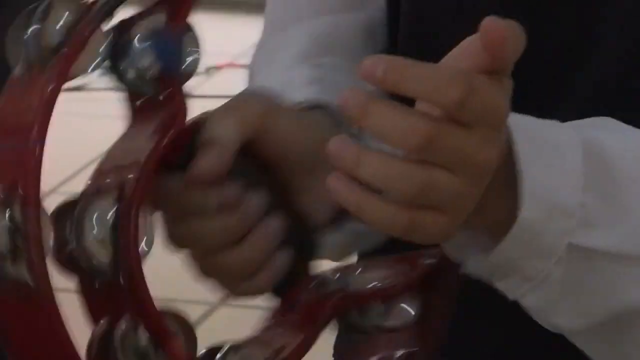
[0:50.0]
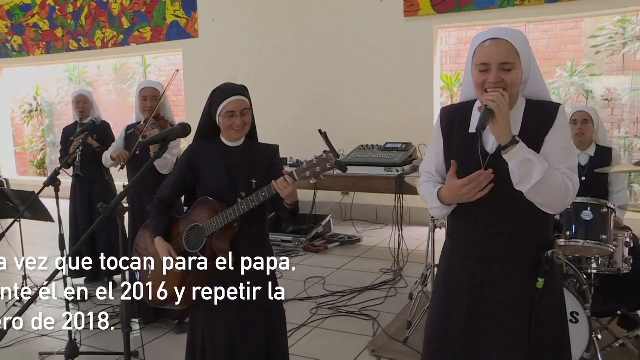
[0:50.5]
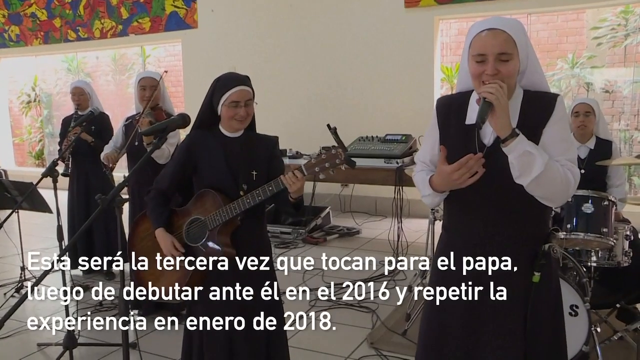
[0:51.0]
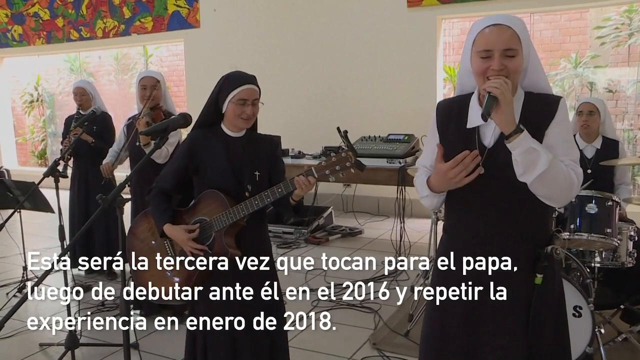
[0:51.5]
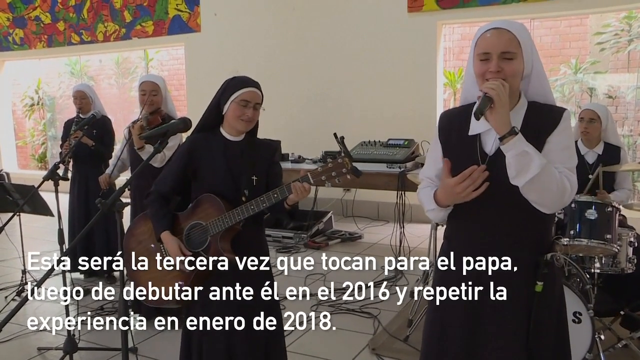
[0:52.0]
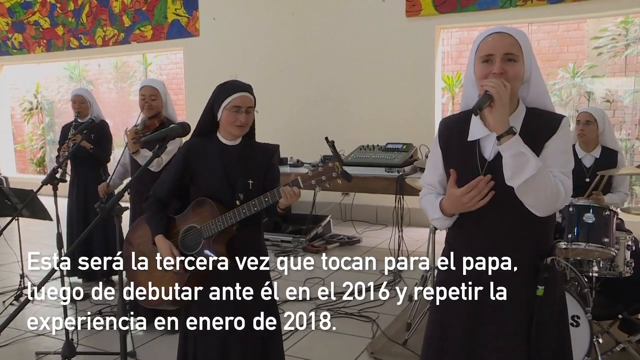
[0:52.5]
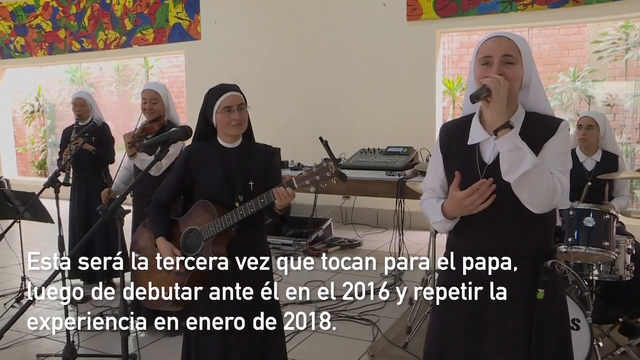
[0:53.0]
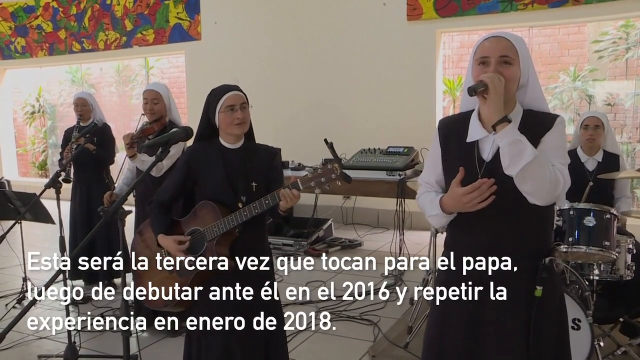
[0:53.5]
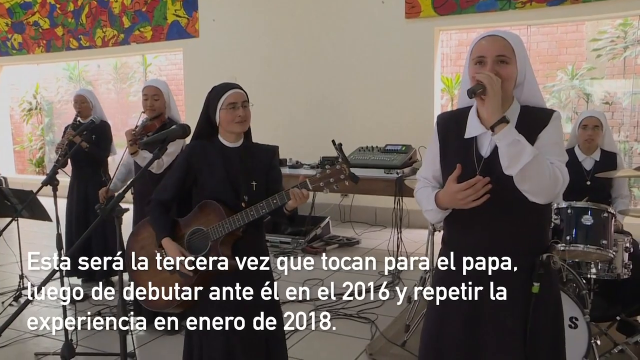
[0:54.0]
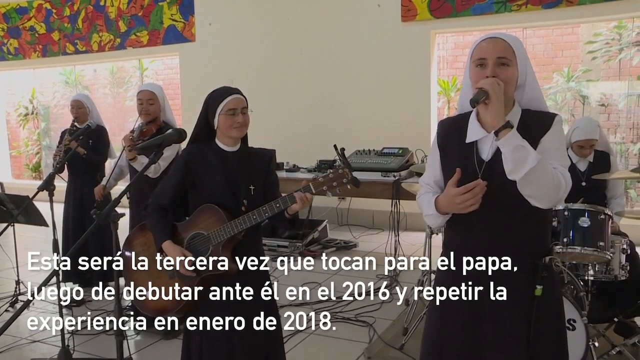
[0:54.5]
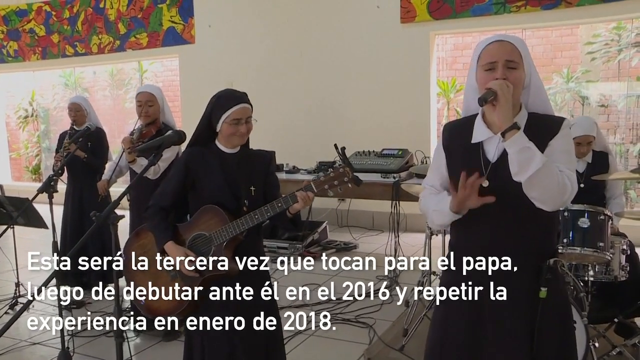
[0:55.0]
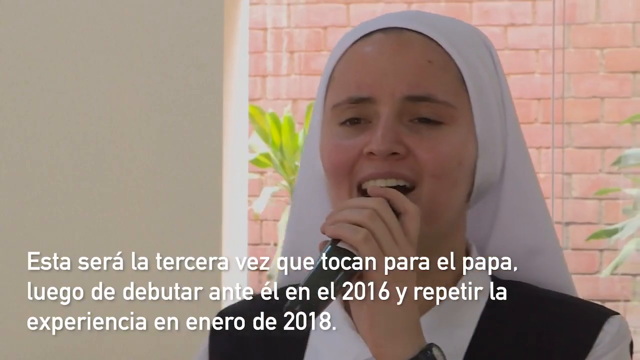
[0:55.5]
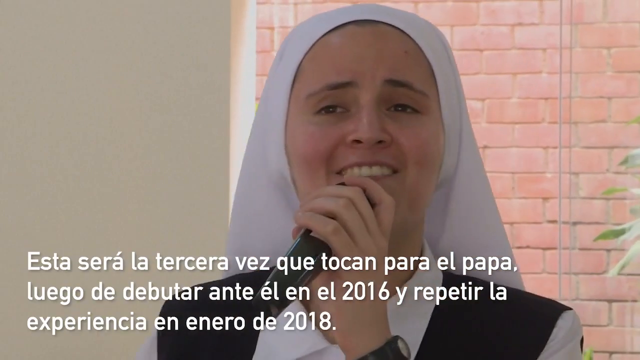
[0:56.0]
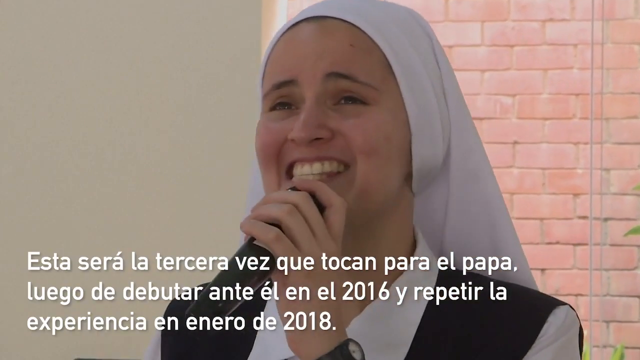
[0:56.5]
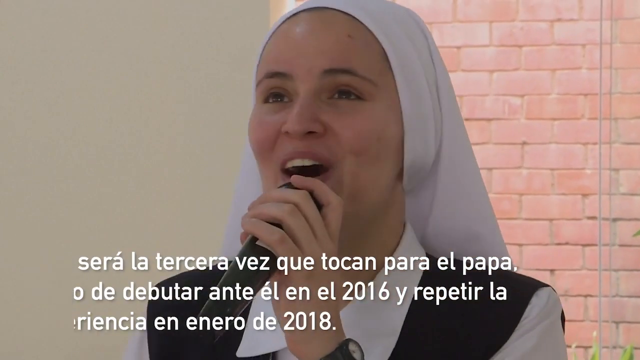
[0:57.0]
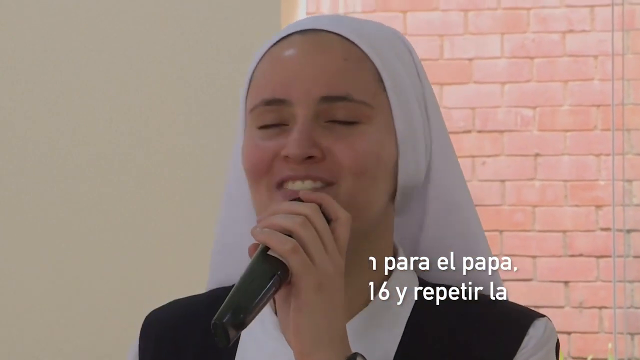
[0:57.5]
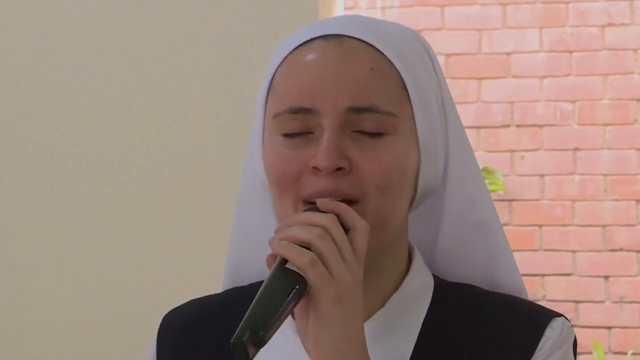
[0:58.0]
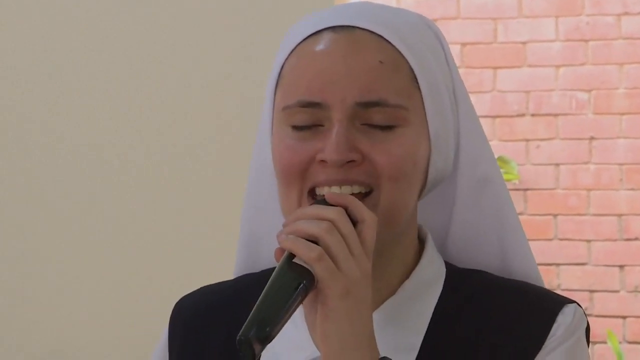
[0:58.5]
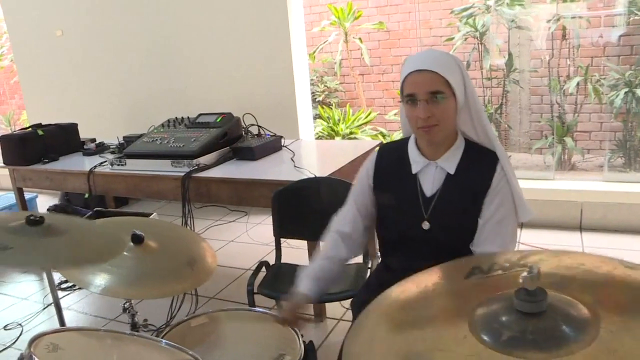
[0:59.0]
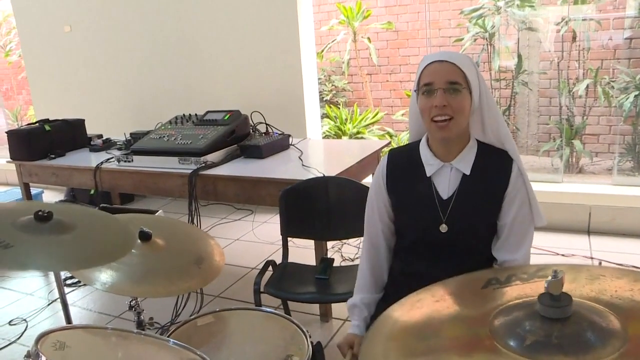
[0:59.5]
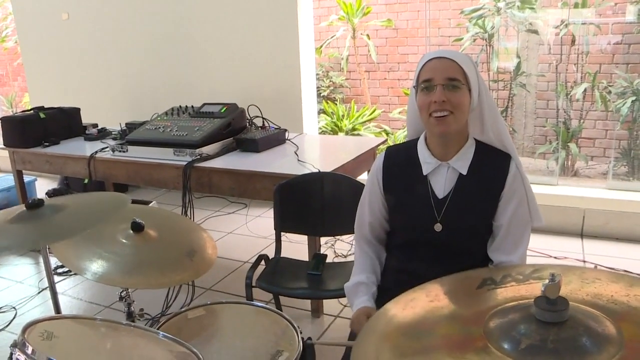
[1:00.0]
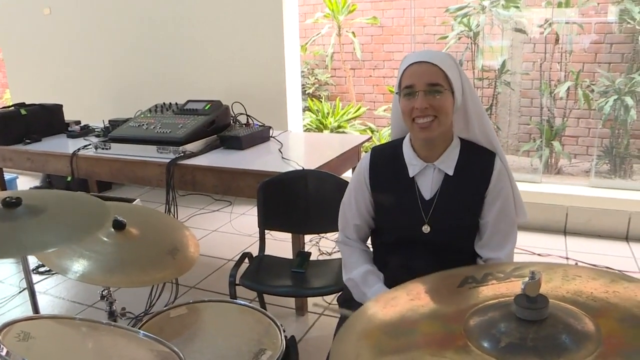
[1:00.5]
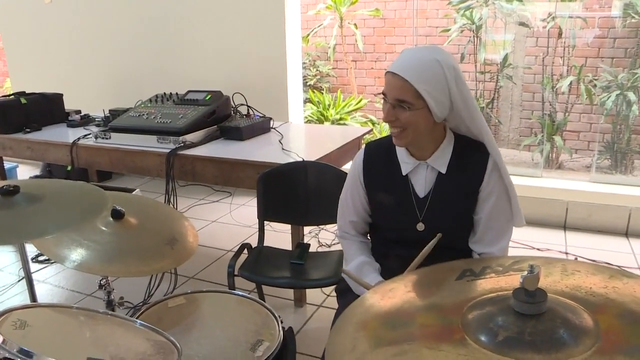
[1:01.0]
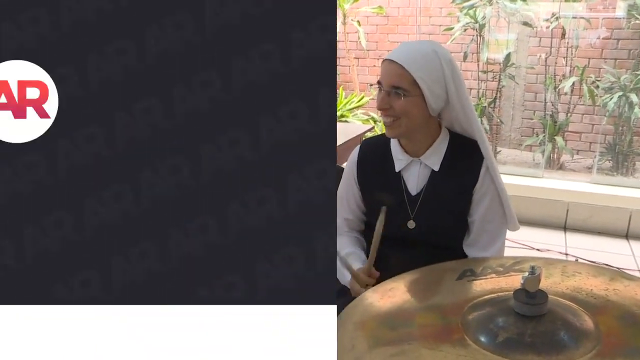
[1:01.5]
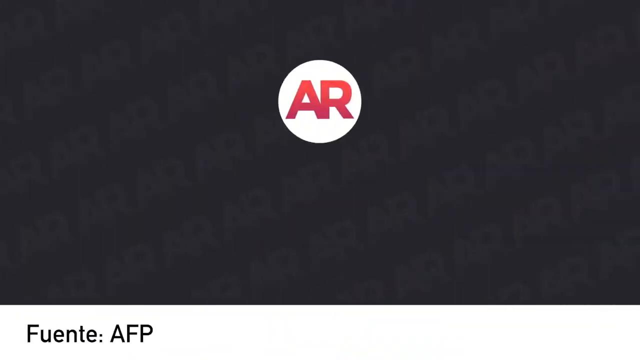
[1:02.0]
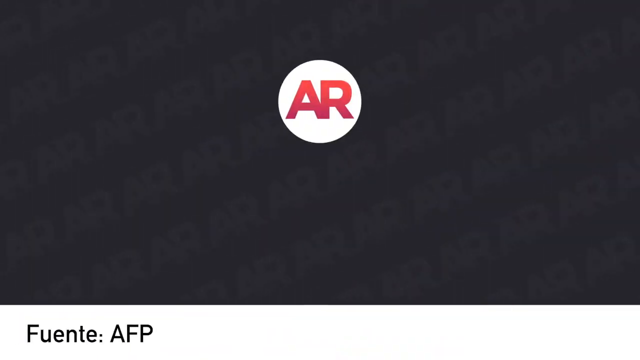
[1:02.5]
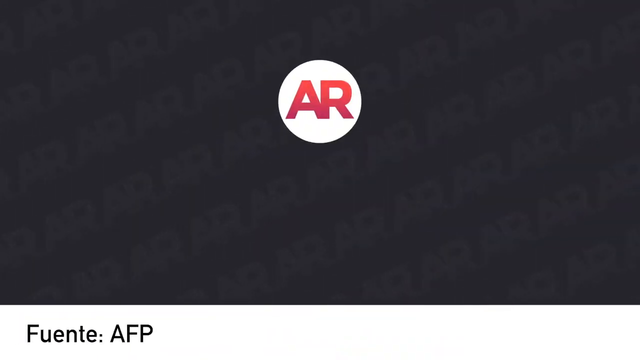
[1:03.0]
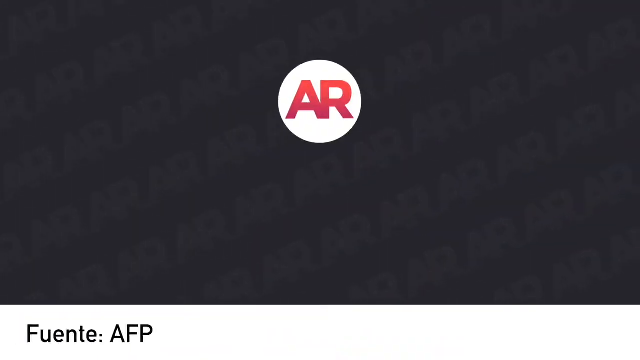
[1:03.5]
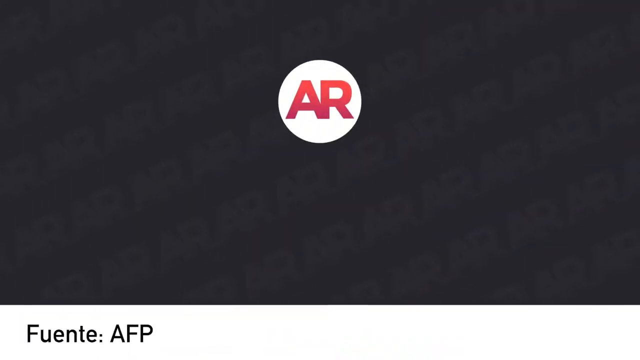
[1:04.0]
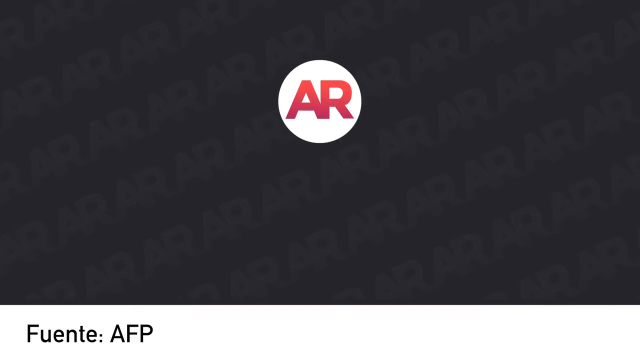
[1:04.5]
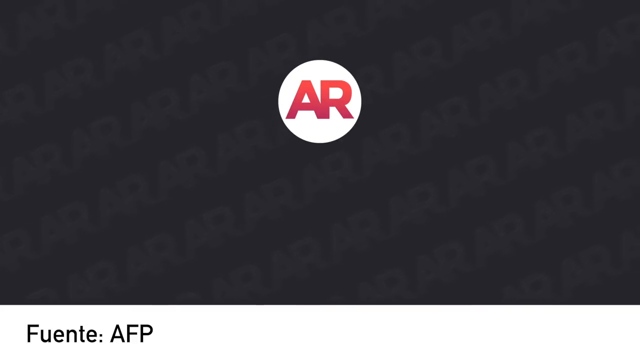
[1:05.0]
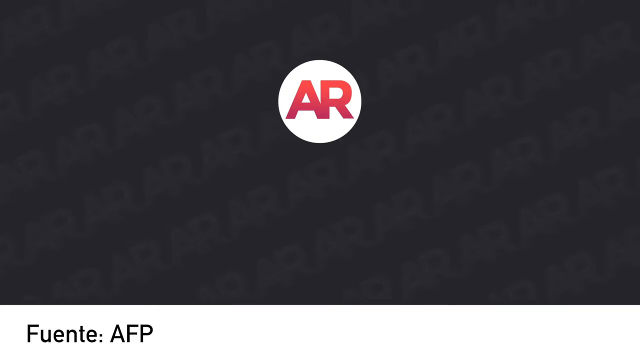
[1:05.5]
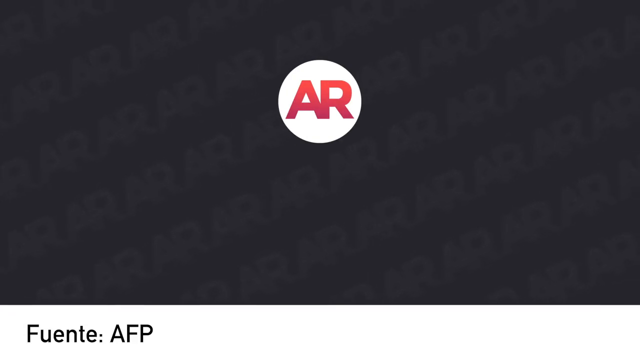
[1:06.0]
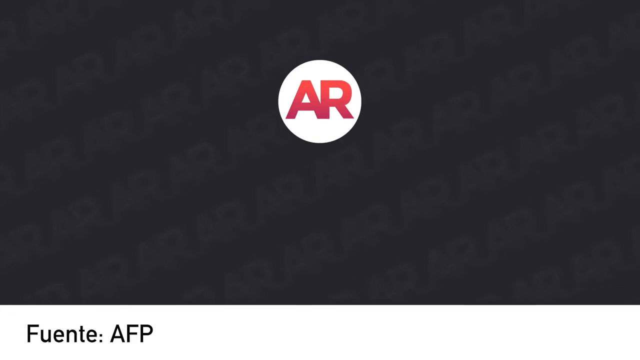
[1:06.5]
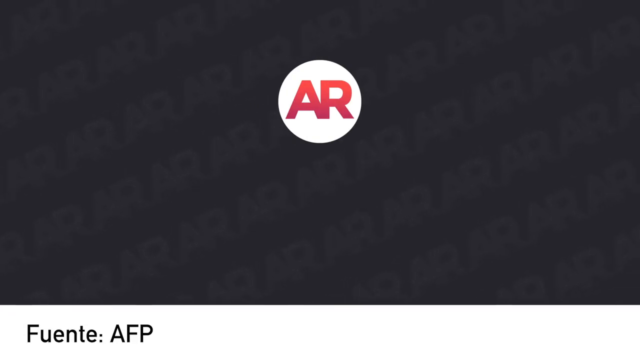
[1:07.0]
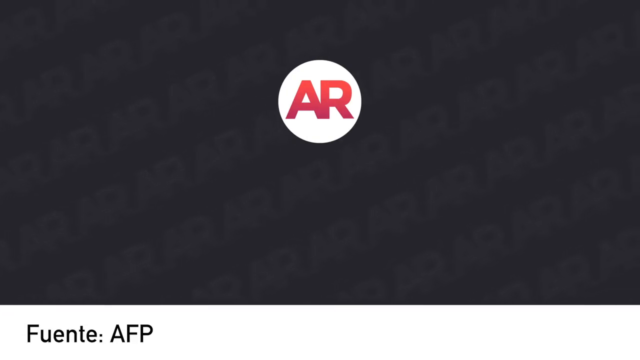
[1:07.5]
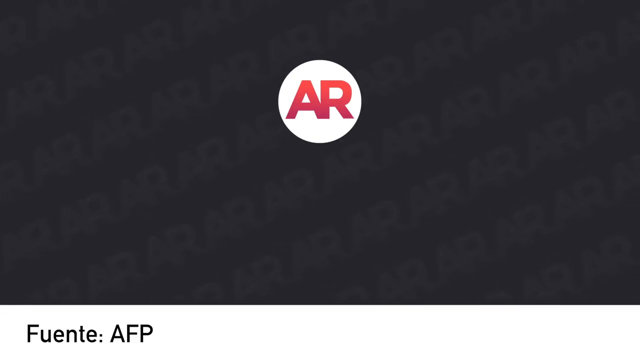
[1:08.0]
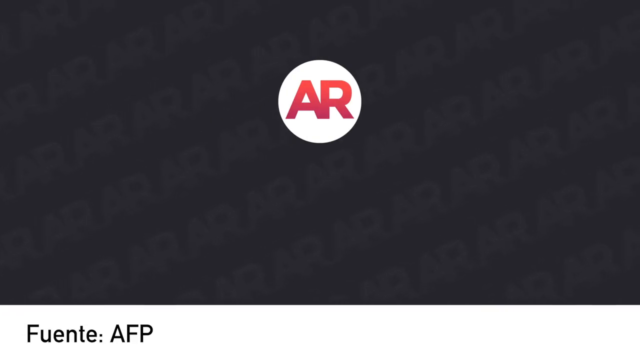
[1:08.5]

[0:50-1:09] A close-up shows a nun playing a tambourine, holding it in her clenched right fist and banging it against the bottom of her outstretched left hand. White text slides in from the left at the bottom of the frame: "Esta sera la tercera vez que tocan para el papa, luego de debutar ante el en el 2016 y repetir la experiencia en enero de 2018." Five of the nuns are on stage: a nun with a woodwind instrument on the left; to her right a nun playing a violin; to her right a nun facing right playing the guitar; to her right a nun facing forward with her eyes closed, singing into a black microphone in her left hand; and to her right, in the background, a nun playing a drum set. A close-up shows the nun singing into the microphone, smiling and seeming very joyous. The text at the bottom disappears. The nun with glasses slams her drumsticks on the cymbals of the drum set, smiling and looking toward the left side of the frame. The video fades to the right. A white circle with the red text "AR" appears in the middle, and a white text box at the bottom left reads "Fuente: AFP" in black text. The background is dark gray, with repeated gray "AR" text moving down and to the left.